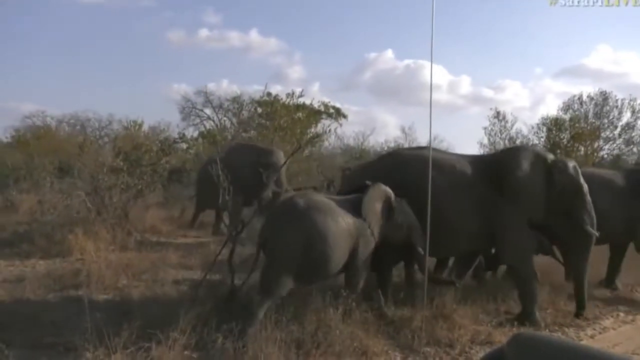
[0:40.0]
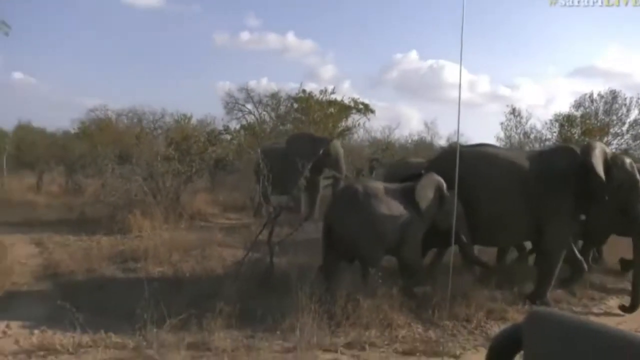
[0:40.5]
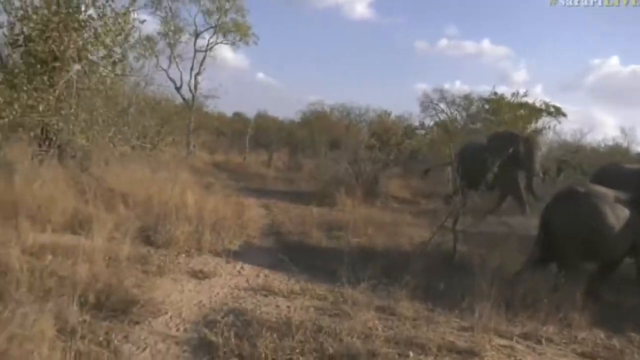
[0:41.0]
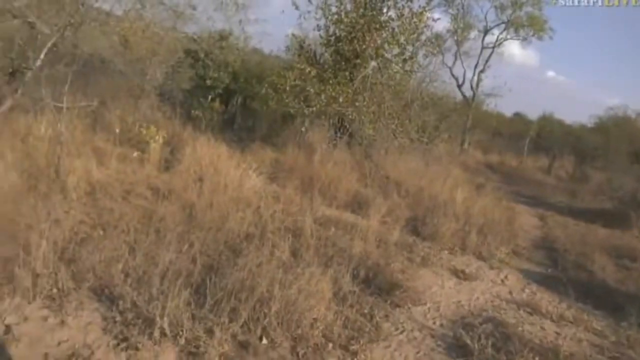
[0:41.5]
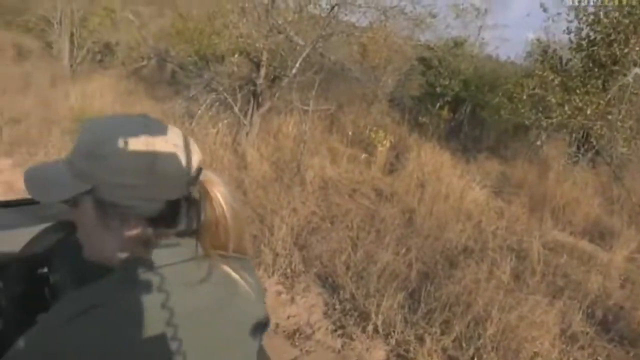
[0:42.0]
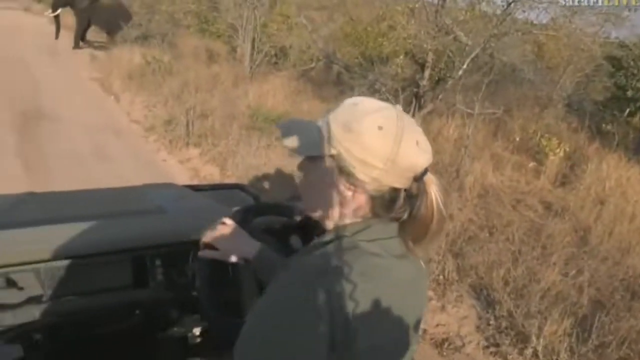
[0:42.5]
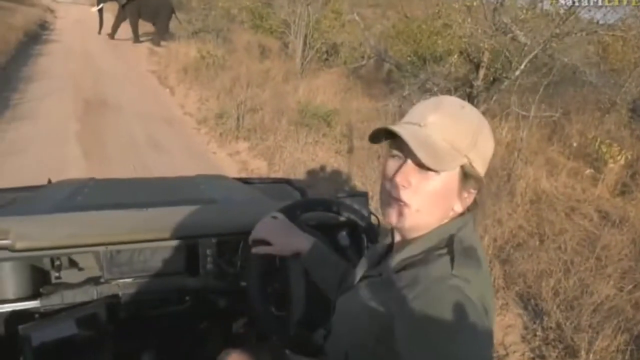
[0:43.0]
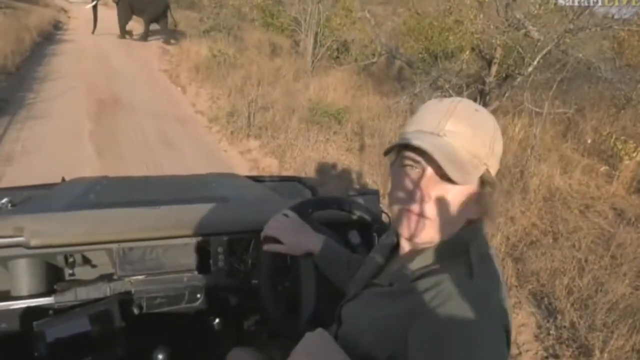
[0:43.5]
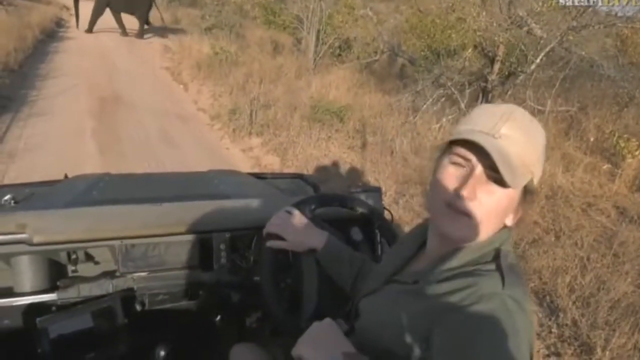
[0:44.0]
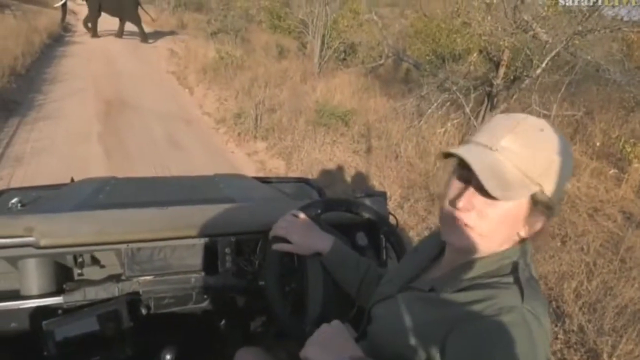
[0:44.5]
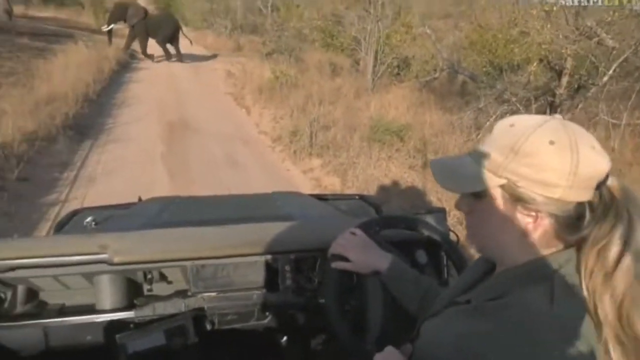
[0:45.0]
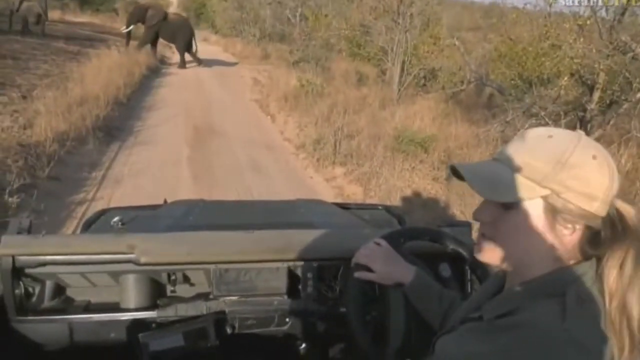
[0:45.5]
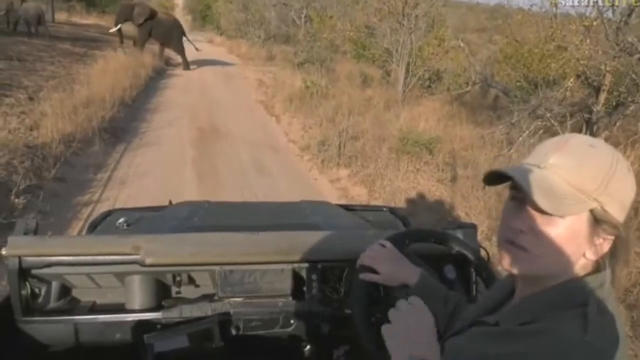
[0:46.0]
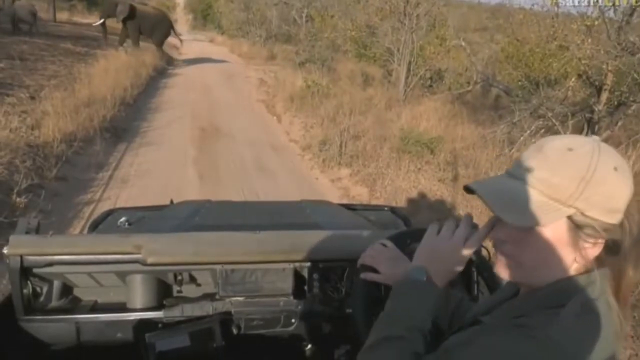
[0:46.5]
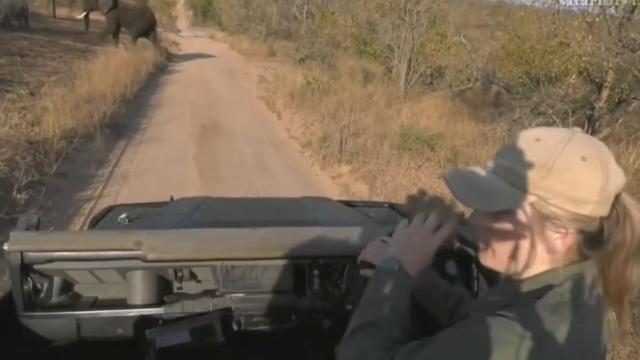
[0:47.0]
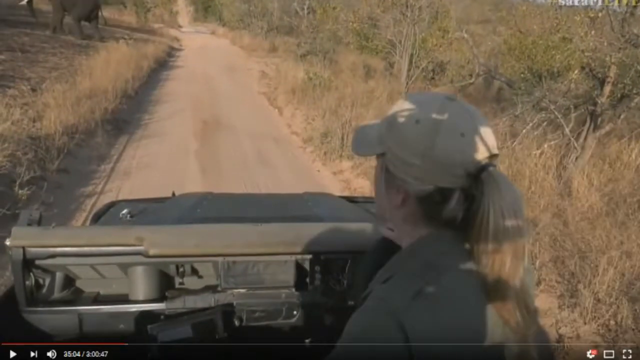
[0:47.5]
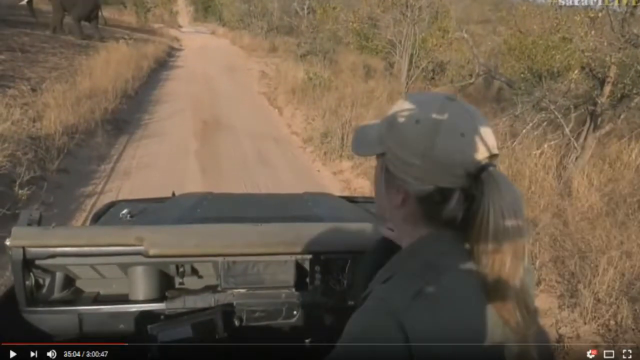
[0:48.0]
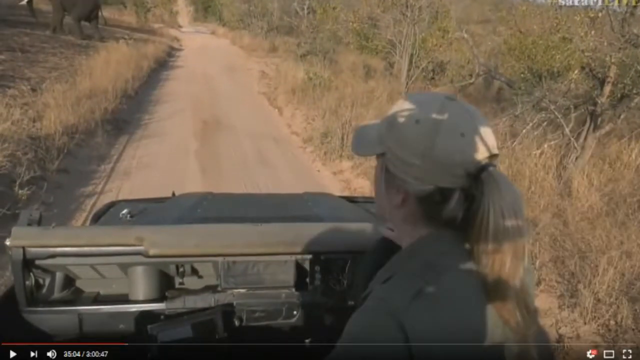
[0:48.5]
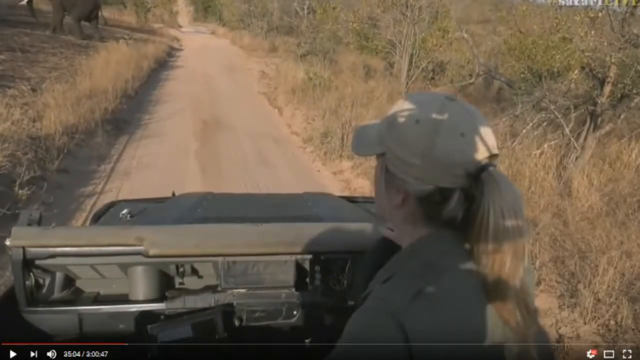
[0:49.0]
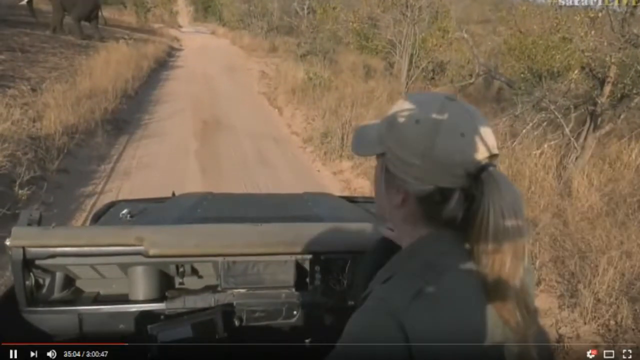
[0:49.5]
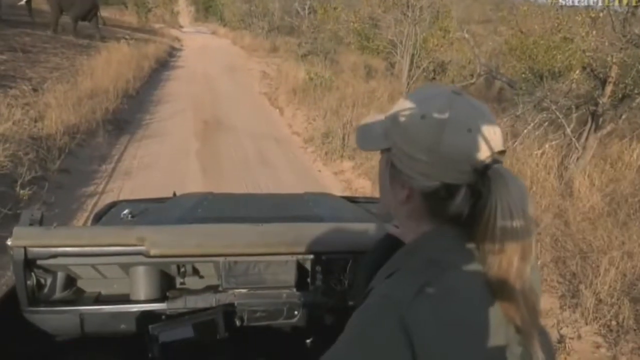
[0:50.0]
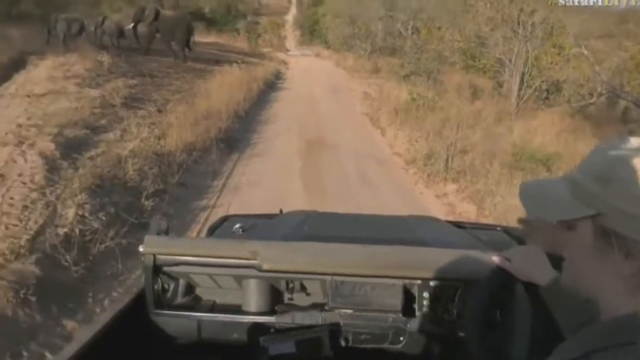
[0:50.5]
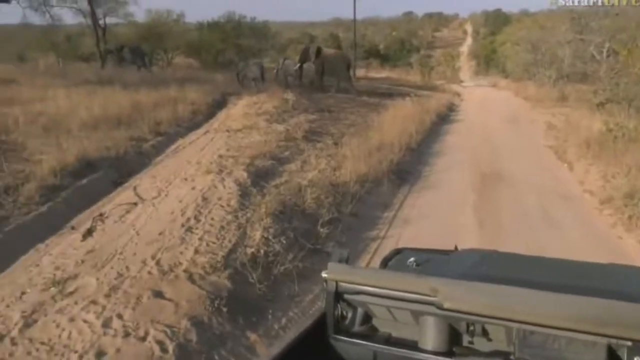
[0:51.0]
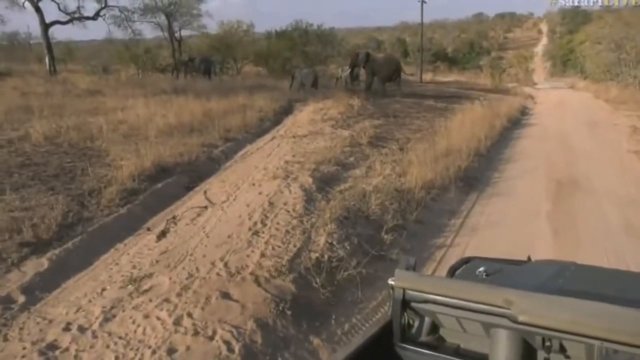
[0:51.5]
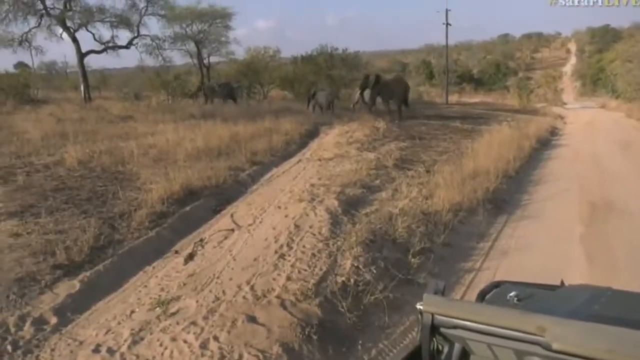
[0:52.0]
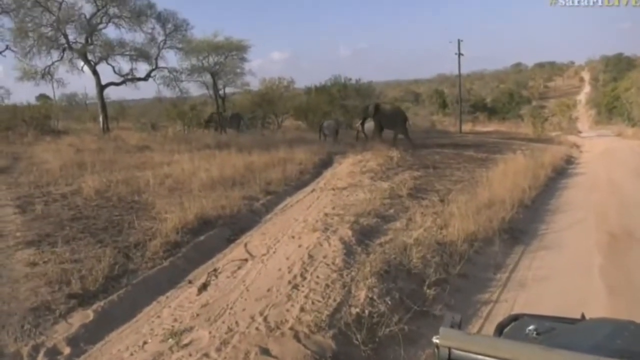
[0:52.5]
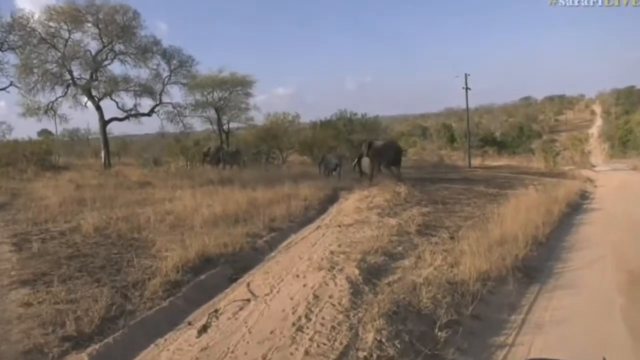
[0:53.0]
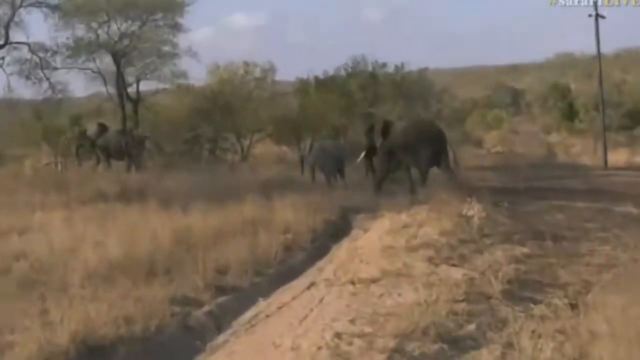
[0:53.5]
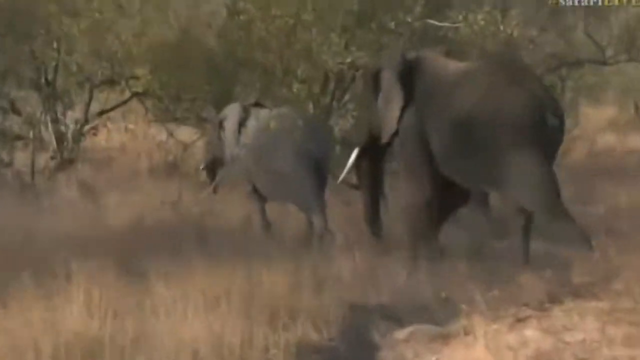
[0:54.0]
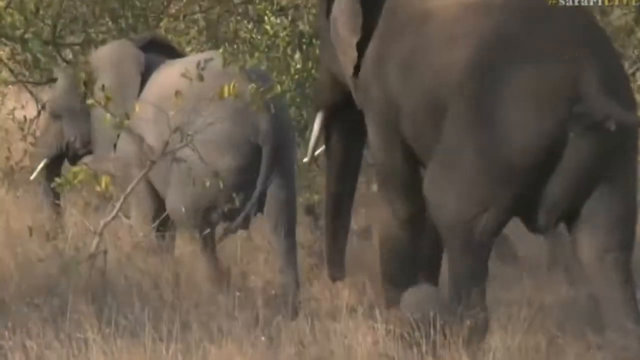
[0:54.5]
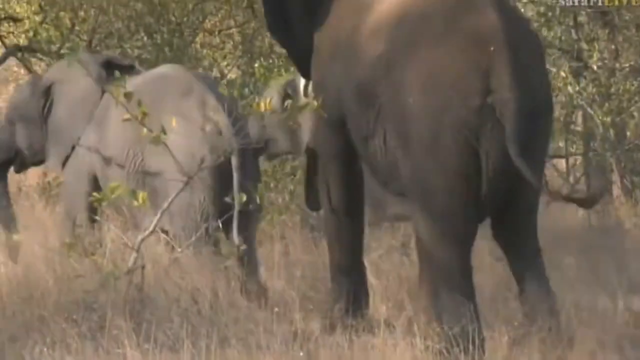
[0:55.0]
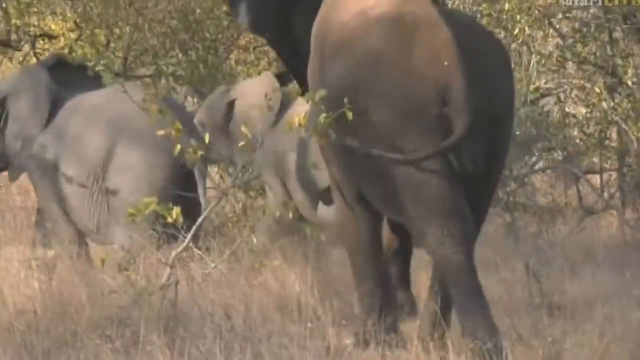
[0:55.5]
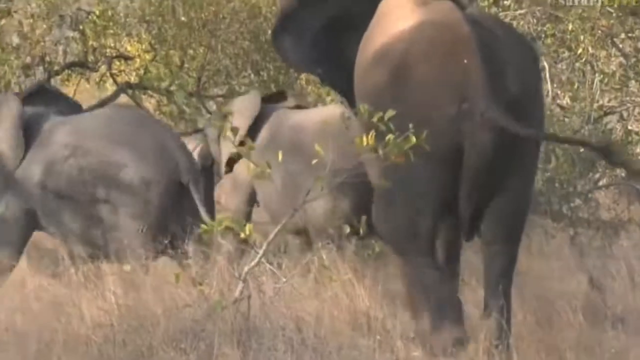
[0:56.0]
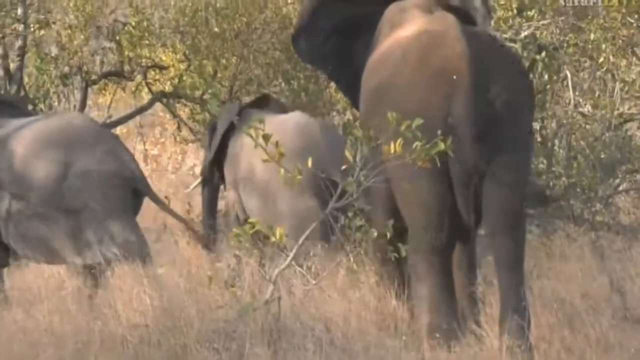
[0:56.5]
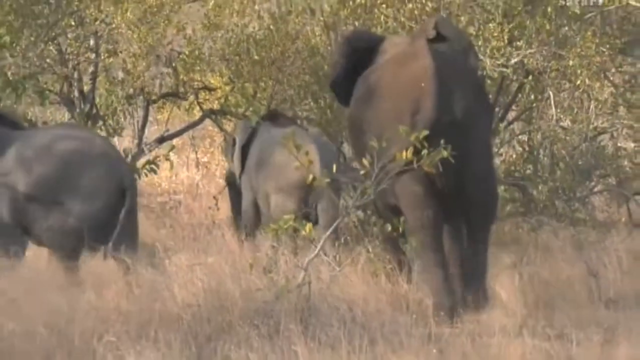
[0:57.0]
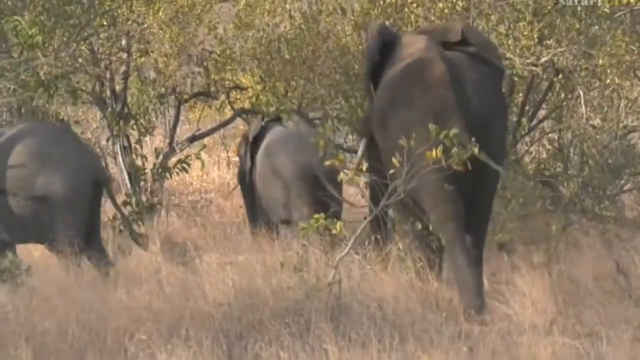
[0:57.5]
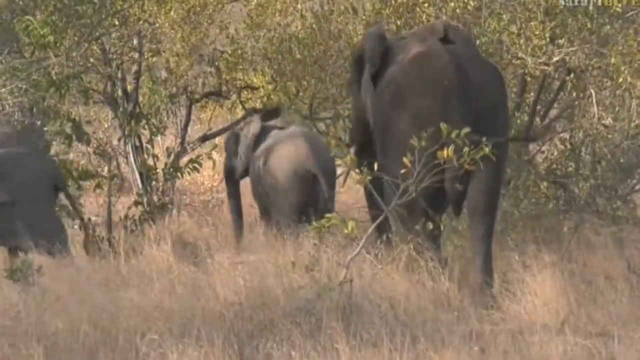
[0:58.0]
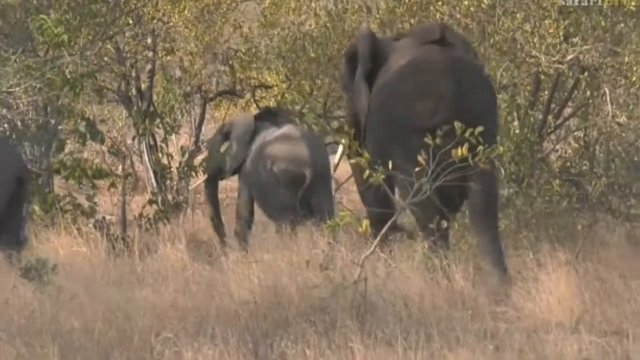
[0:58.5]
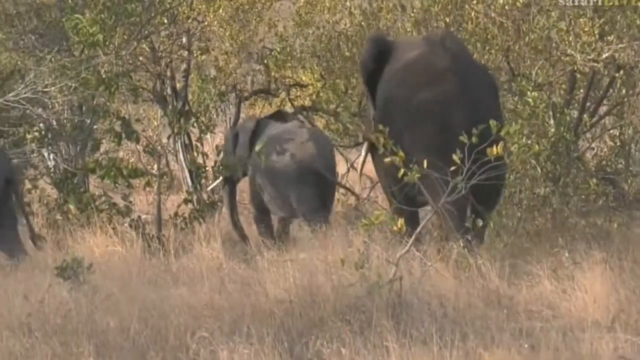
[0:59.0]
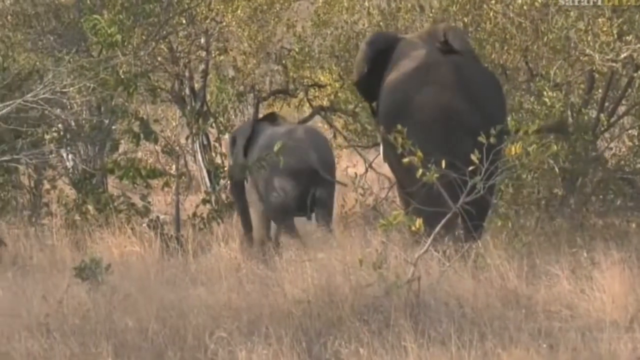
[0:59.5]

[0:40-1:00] The herd moves in the opposite direction from the vehicle, which appears to be a jeep or some four-wheel-drive vehicle, shown briefly. A person driving on the right-hand side turns around; she appears to be a woman in her late 30s or early 40s wearing a brown cap and a wristwatch on her left hand, with a shadow, possibly from a camera person, cast on her. She is speaking. The camera zooms in on another family of elephants that crossed in front of the vehicle, which stopped. These elephants walk in the distance, shown from behind, and also look like a family, with elephants of different shapes and sizes leaving the area. Two of them have a lot of wrinkles, so they may be older adults.